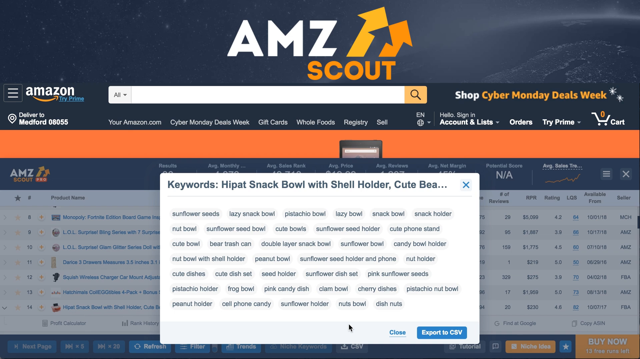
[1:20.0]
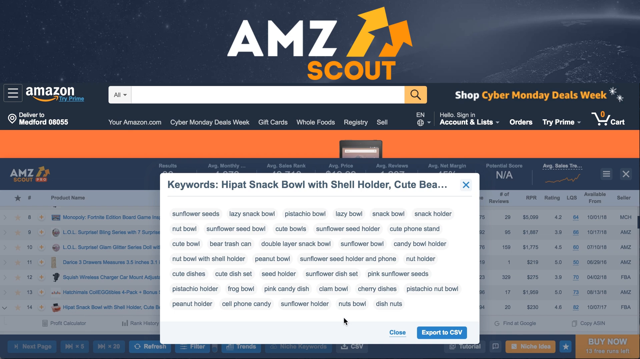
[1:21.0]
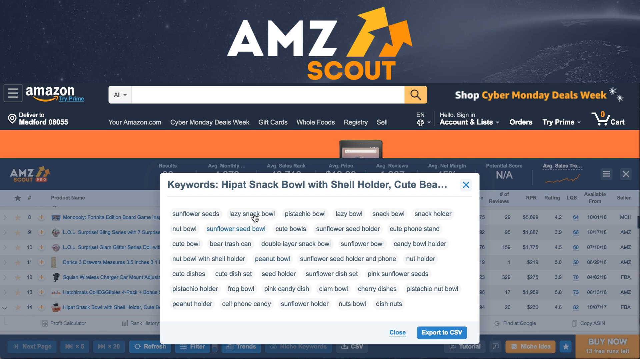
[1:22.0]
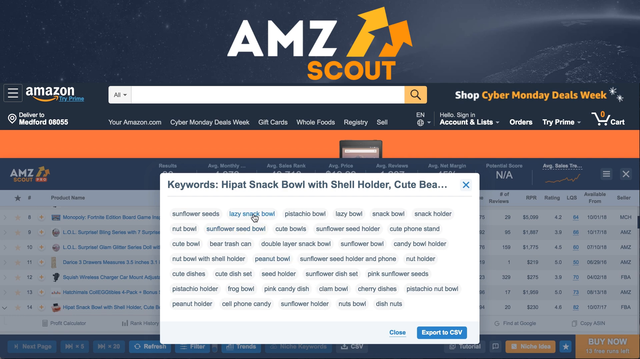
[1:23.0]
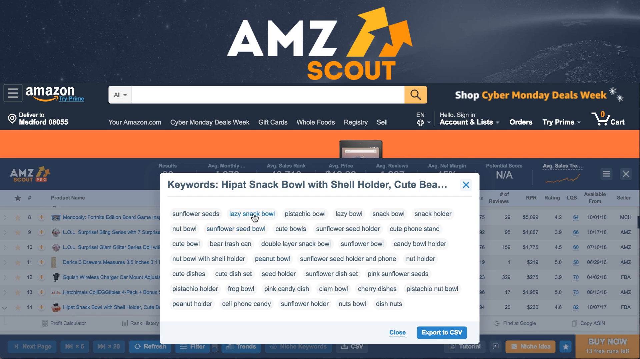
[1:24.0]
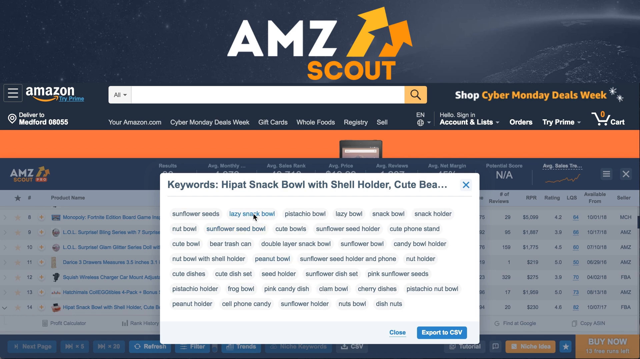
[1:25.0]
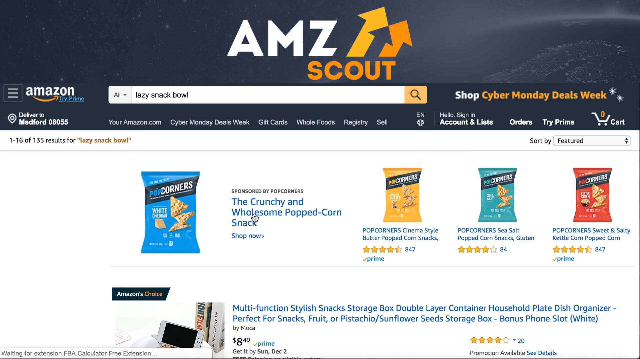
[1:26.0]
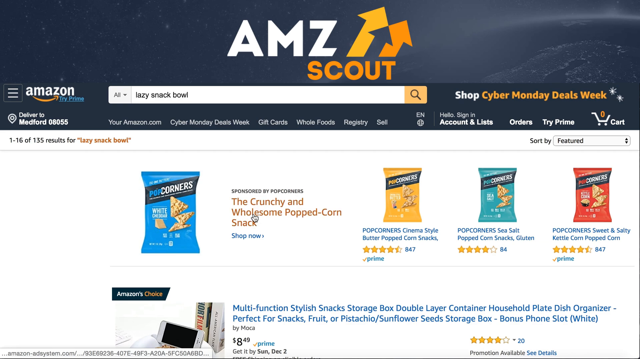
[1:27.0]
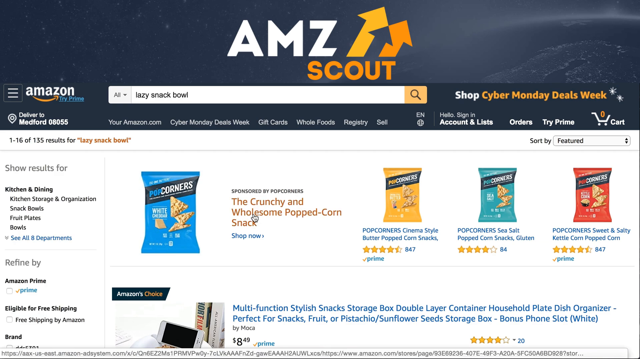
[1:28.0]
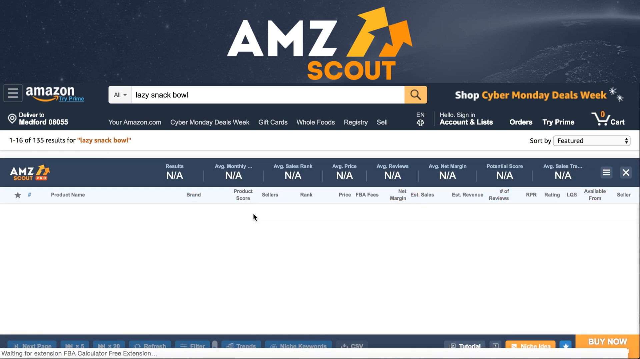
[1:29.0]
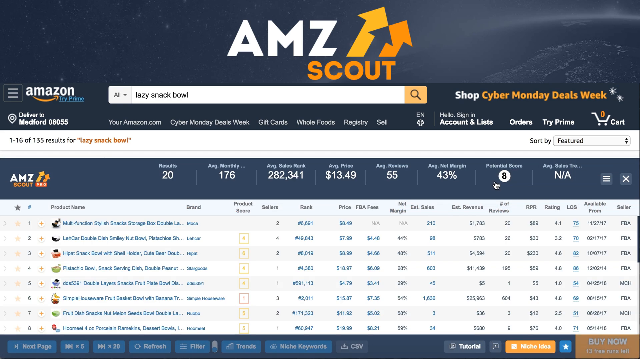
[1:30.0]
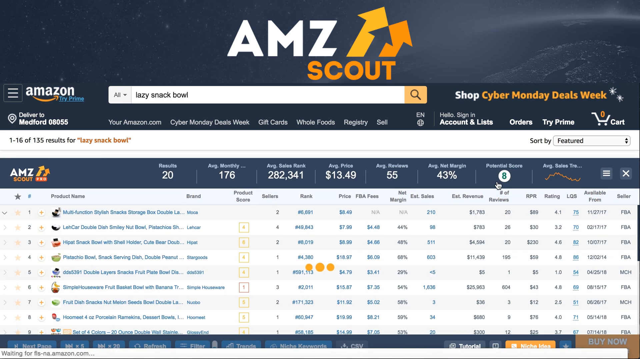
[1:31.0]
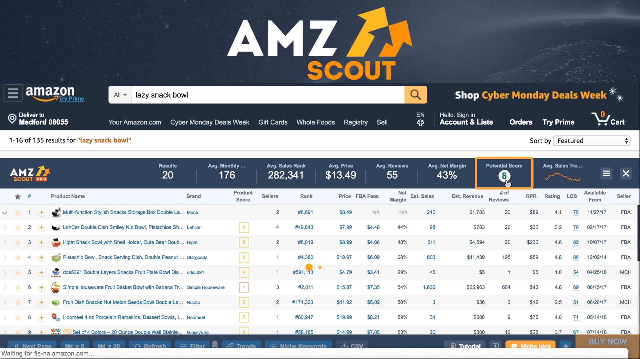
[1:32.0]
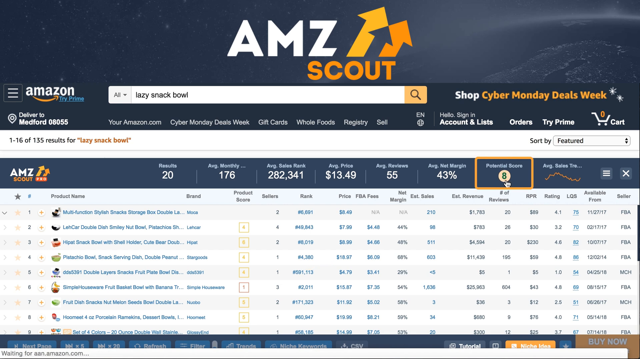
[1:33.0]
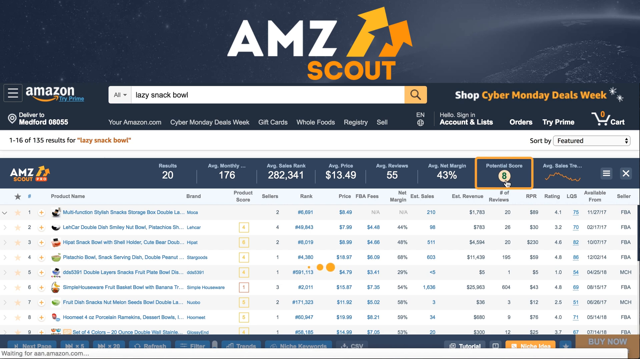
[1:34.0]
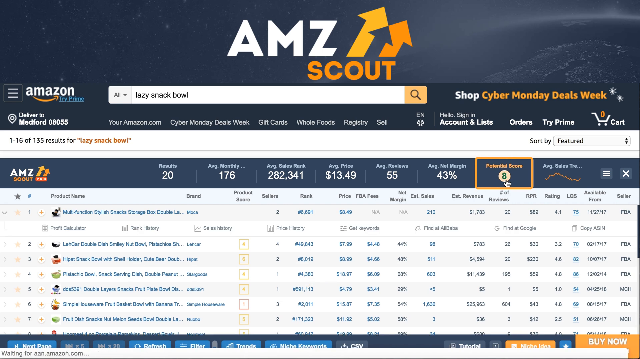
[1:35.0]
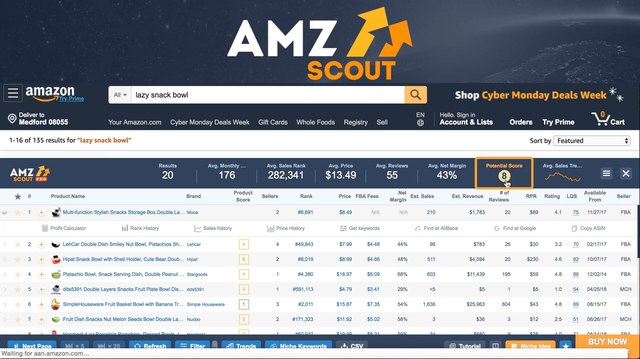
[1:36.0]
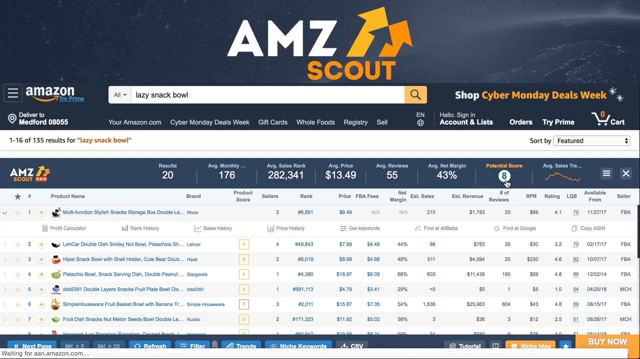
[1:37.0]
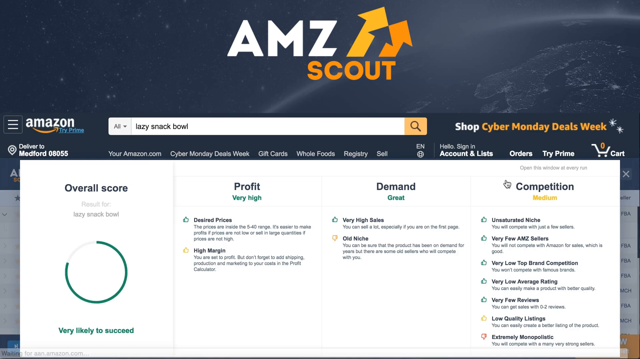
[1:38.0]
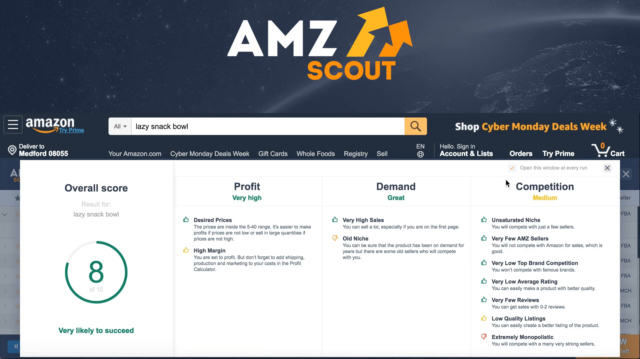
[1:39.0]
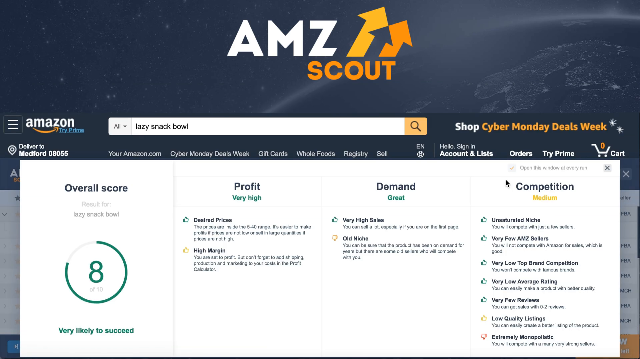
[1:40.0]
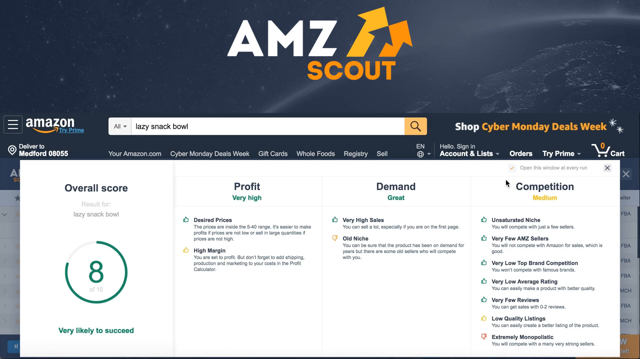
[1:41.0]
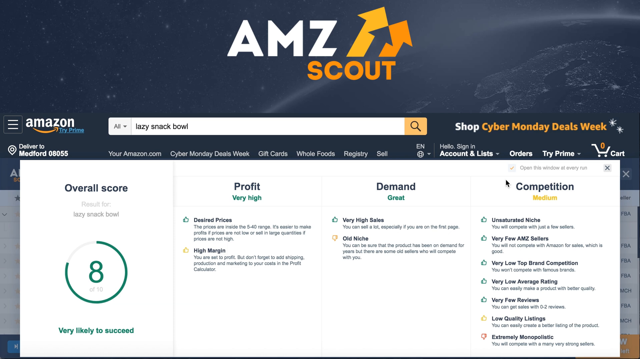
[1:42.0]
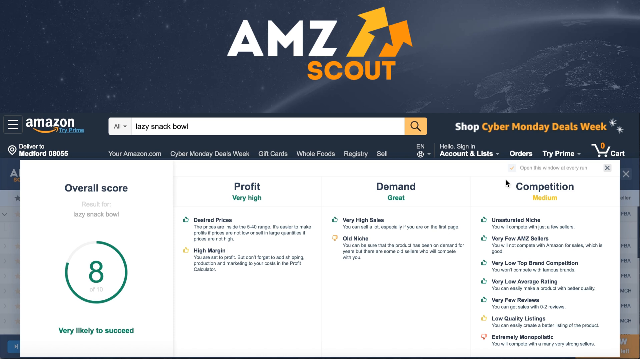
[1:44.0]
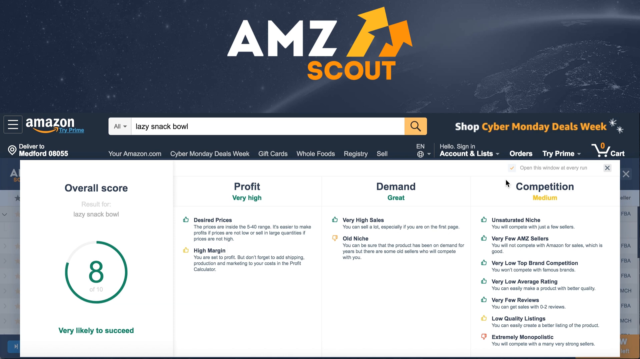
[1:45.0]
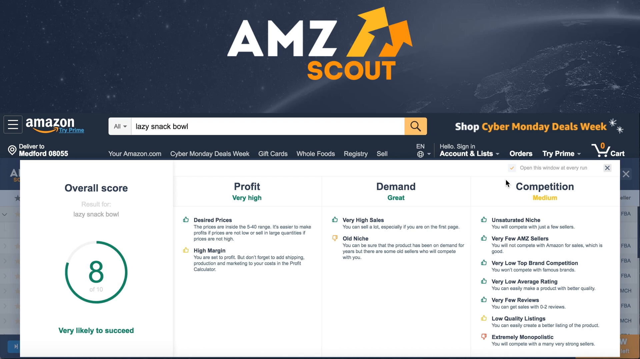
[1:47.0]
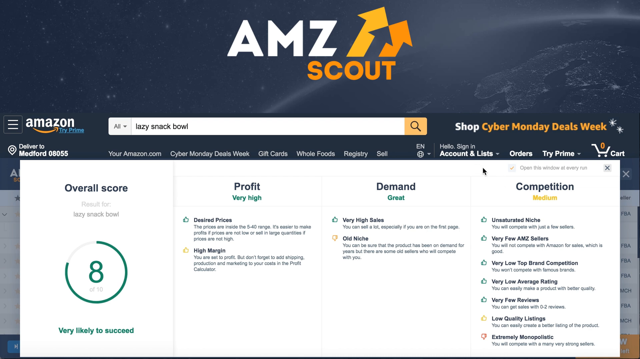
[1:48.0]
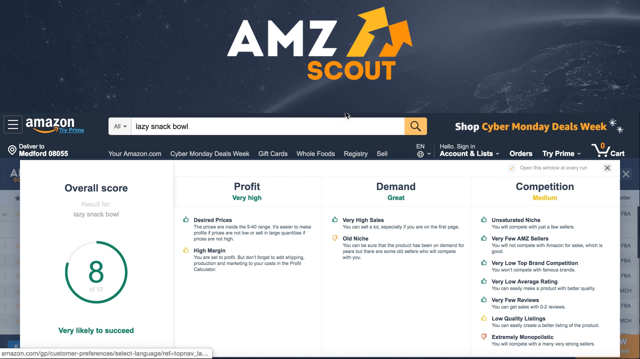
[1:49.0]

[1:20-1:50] More keywords for the snack bowl with shell holder are listed, including bear trash can, cute bowls, cute dish set, seed holder and frog bowl. Lazy snack bowl is selected and a new page comes up showing a crunchy and wholesome popcorn snack, a product named Popcorners, in its various available flavors. The view returns to the product page and potential score is selected; an ellipsis shows it is working, and an overall score comes up for the lazy snack bowl: an 8 in green inside a circle that is closed only up to 8, almost as if 10 is the total. Under it is "very likely to succeed". A profit column reads "very high" with "desired price high margin". The demand column reads "great" with "very high sales". Competition shows as "medium", with reasons listed beneath: "unsaturated niche", very few sellers, "very low top-ranked competition", "very low average rating", "very few reviews" and "low quality listings".